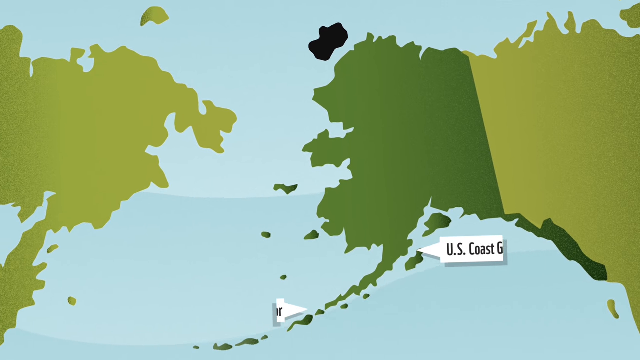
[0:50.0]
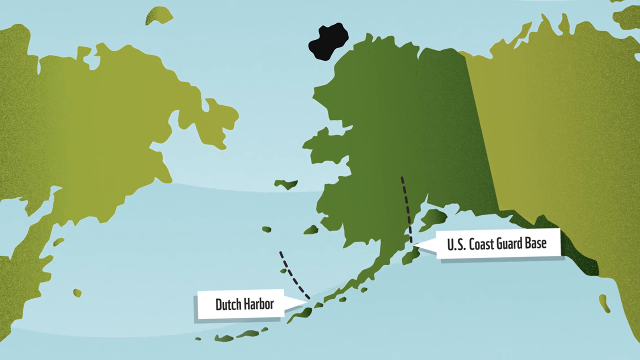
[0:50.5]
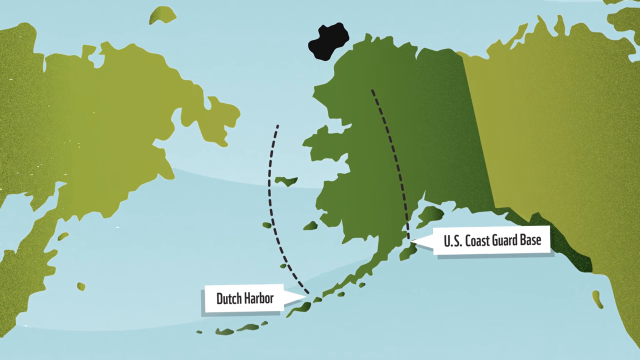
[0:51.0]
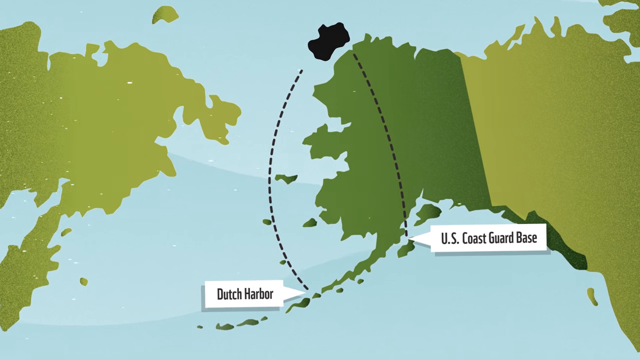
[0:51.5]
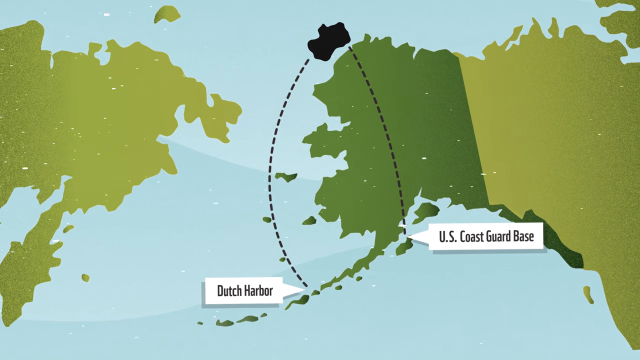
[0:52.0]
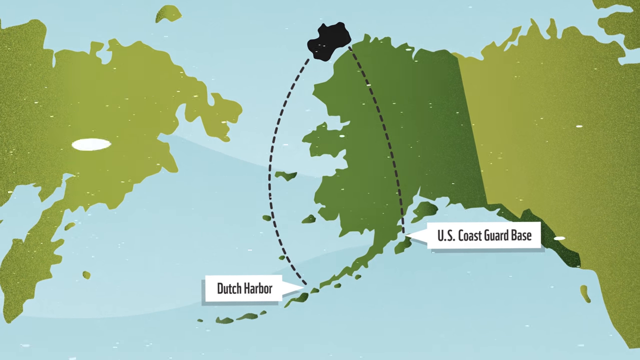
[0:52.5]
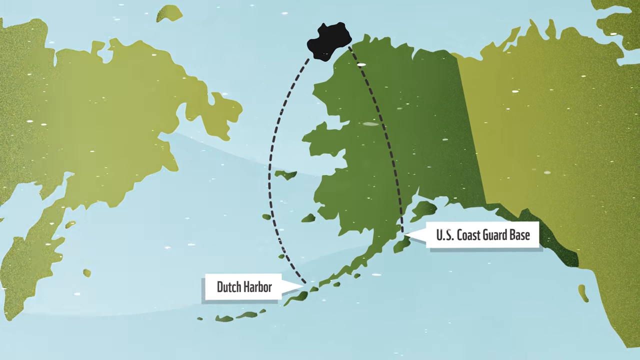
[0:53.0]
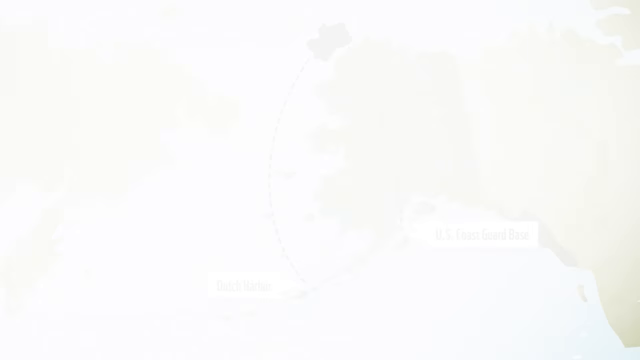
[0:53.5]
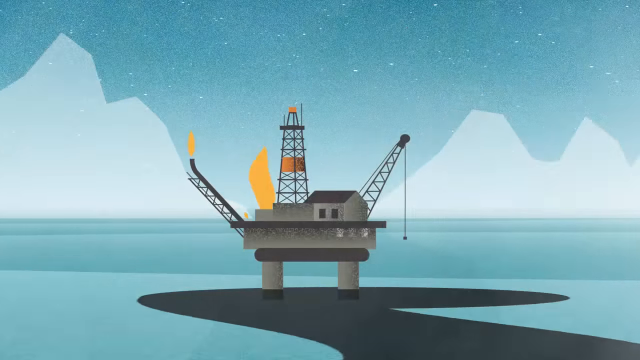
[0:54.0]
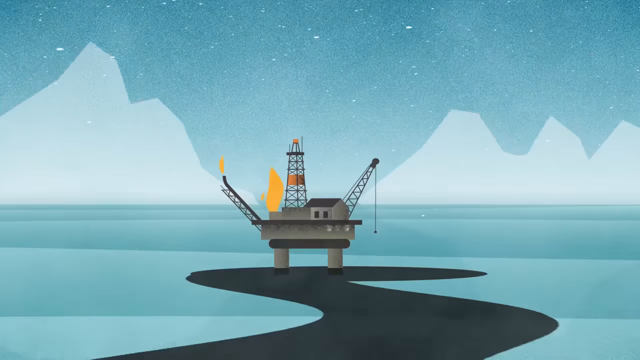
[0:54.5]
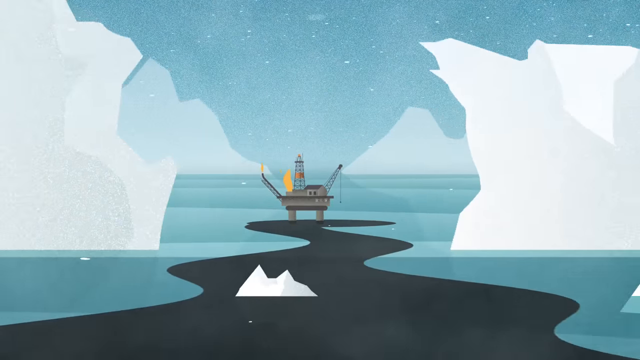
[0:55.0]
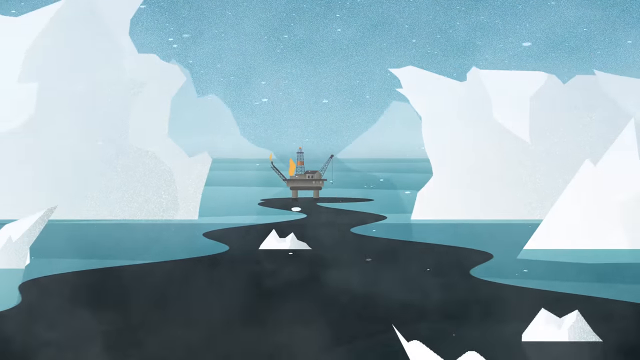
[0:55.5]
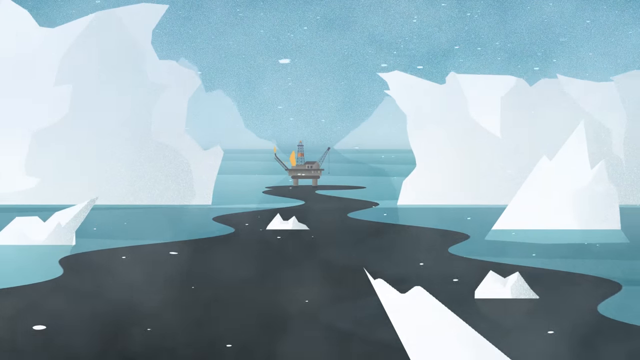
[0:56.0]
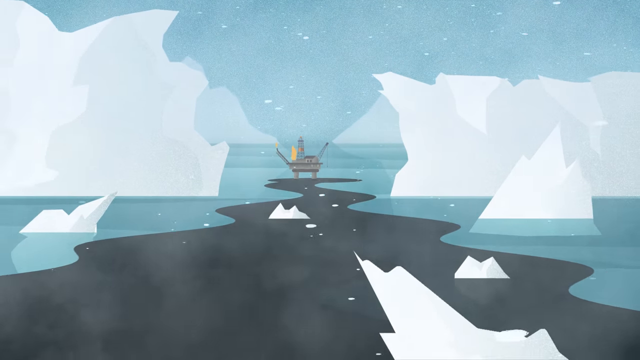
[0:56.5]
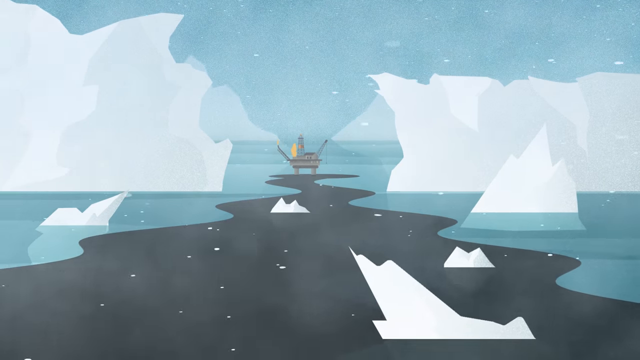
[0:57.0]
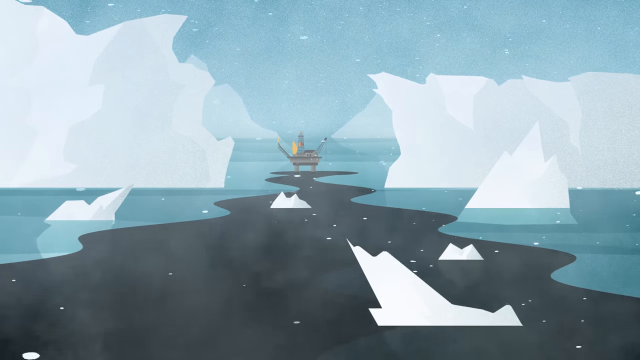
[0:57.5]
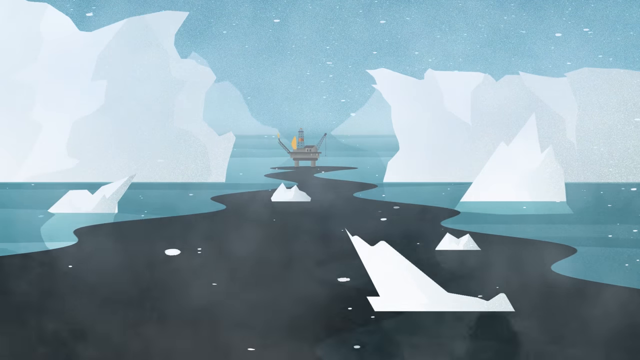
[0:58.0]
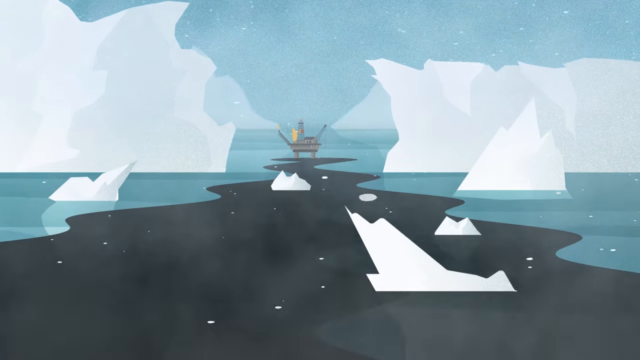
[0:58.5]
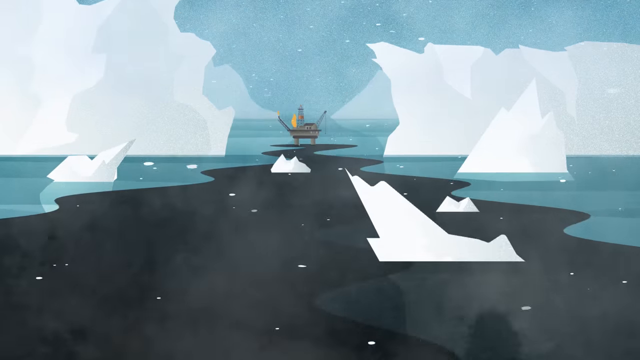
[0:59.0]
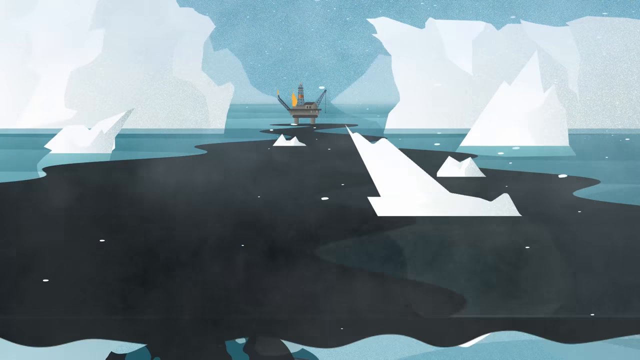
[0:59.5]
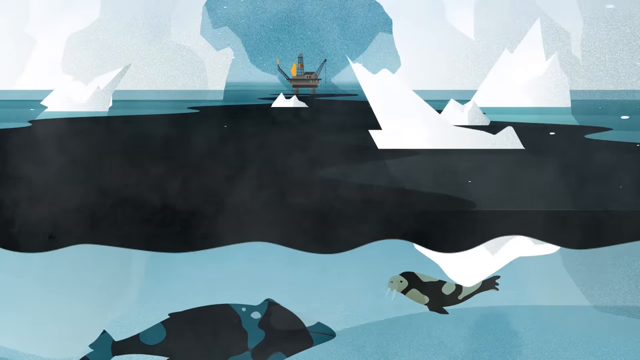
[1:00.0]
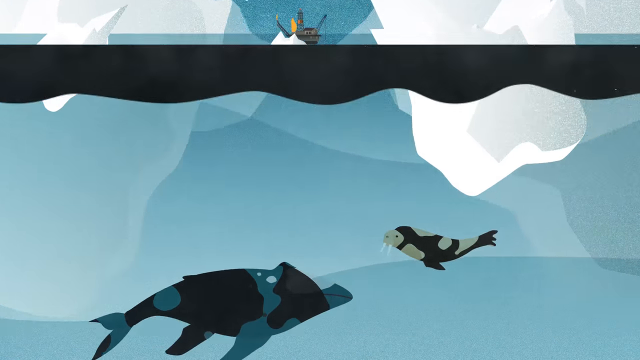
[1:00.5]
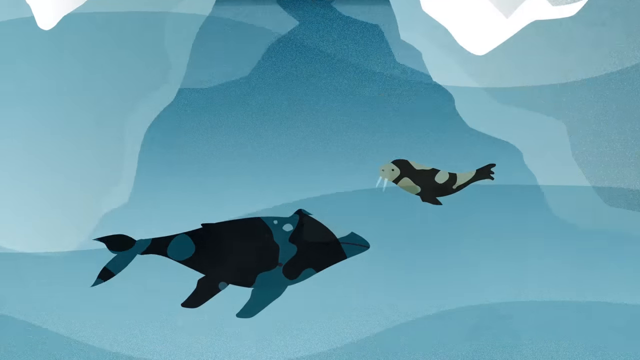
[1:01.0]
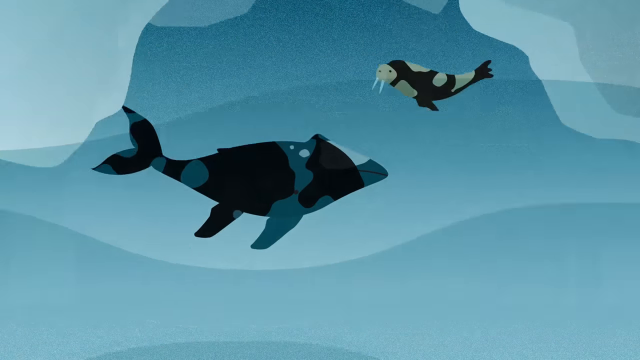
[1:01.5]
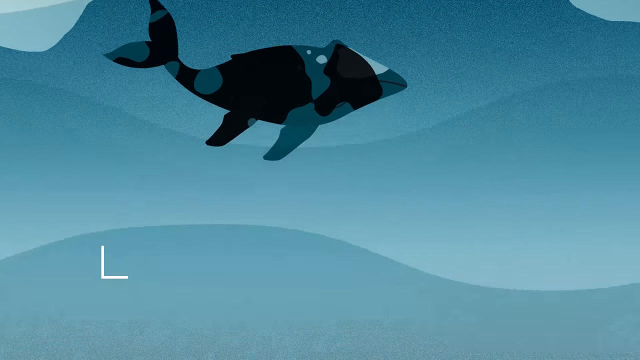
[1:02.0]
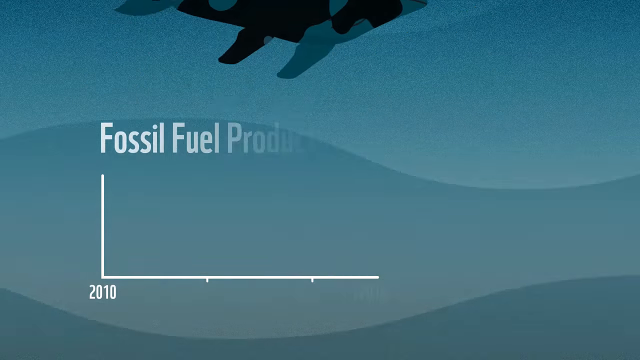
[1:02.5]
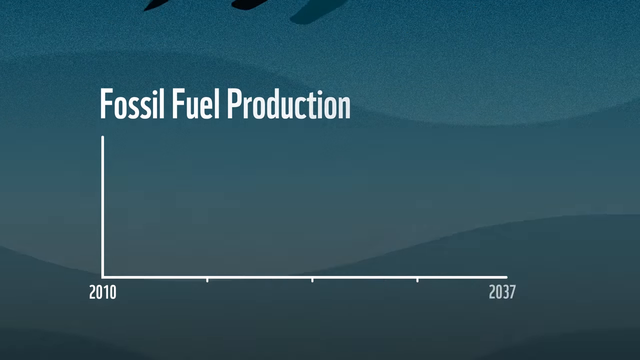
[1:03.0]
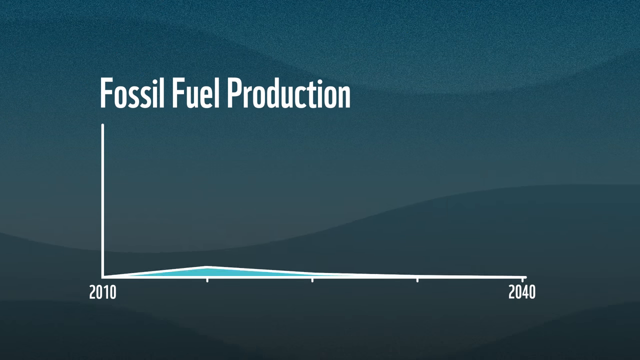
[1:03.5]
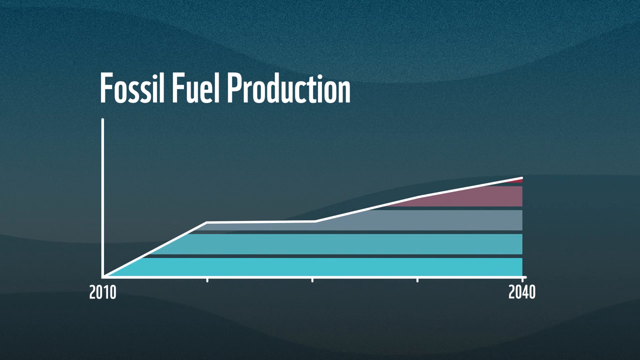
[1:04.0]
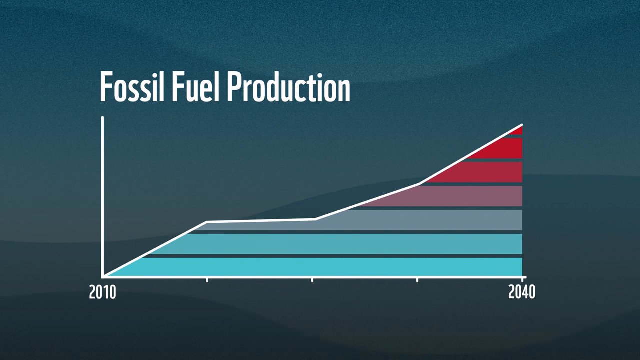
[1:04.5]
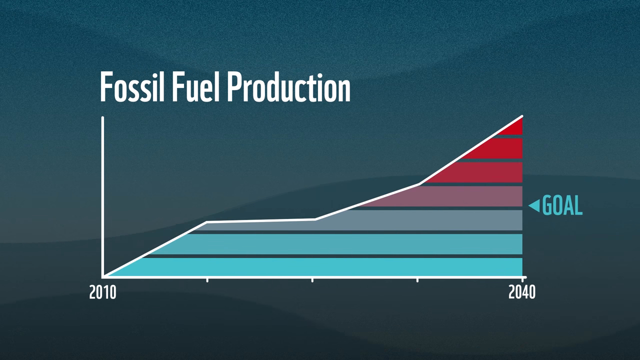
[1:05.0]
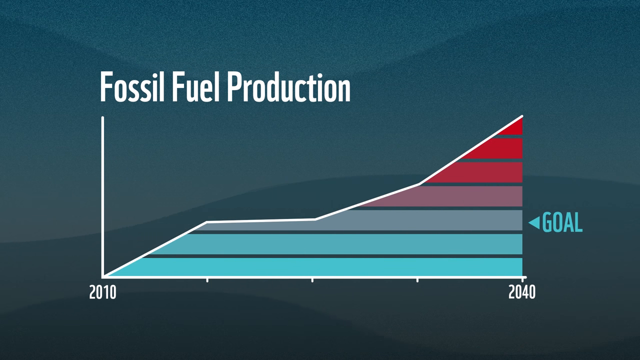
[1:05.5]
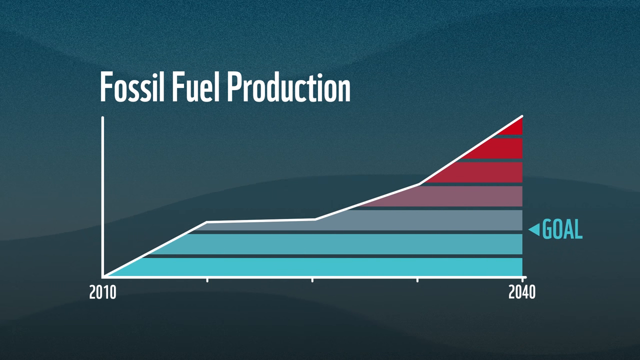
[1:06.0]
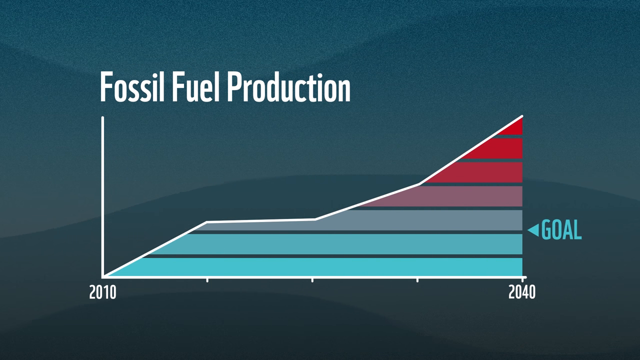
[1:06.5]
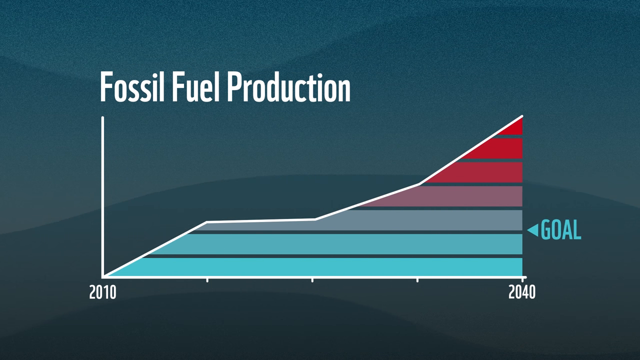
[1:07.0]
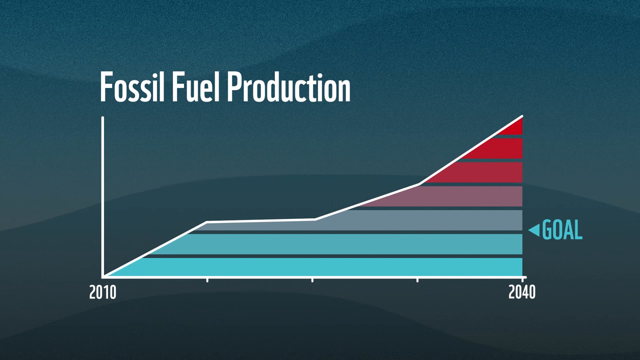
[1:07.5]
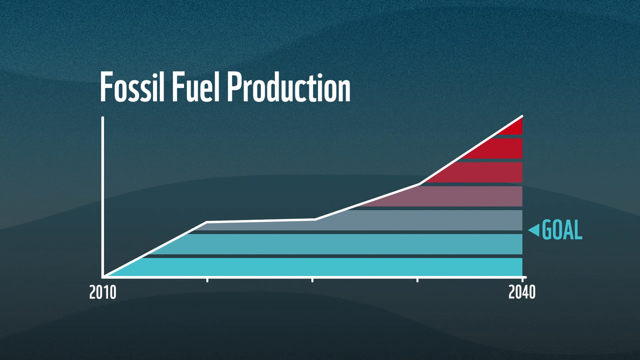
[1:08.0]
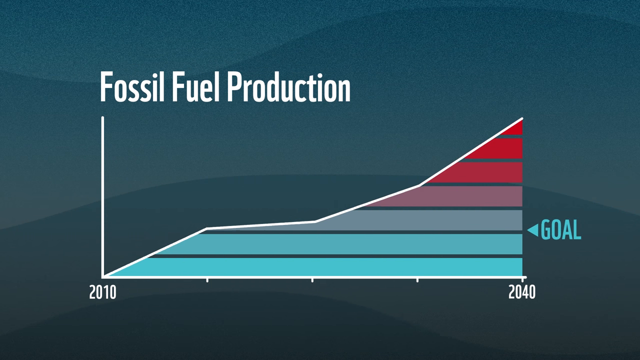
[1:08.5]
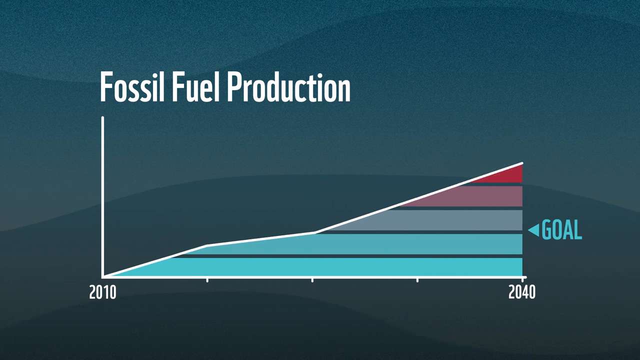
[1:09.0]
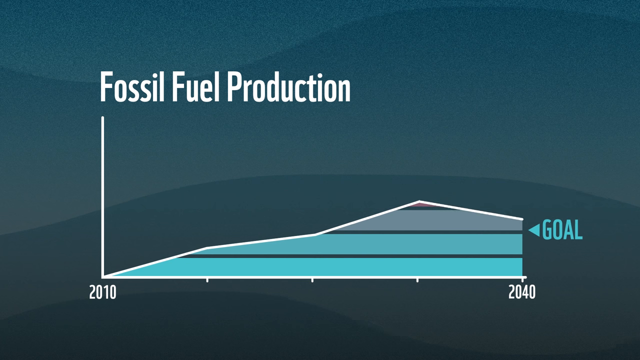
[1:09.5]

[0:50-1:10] An aerial map shows Canada, Alaska and, across from them, Russia, with the Bering Strait between them. The countries are rendered in shades of drab ochre and olive against blue water. Off the northwest coast of Alaska, in the ocean, a large black blob represents the oil slick. Below that, all the way across the state on its southern border, an arrow indicates the location of the U.S. Coast Guard. There is a sign for Dutch Harbor, and two dotted lines stretch up from the U.S. Coast Guard base and the Dutch Harbor base toward the oil slick, indicating direction of travel. Then the burning oil rig appears, with the oil slick still there and growing. The white icebergs have moved even closer to the oil rig, and it is snowing where the rig is. The camera pans back down through the ocean, where the same orca, seals and walruses appear, now all covered with oil. A graph then appears that says "fossil fuel production" and shows the goal between 2010 and 2040: initially the arrow points up, and by 2040 it points down.